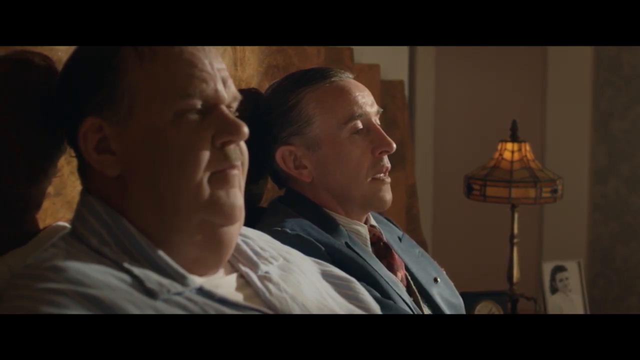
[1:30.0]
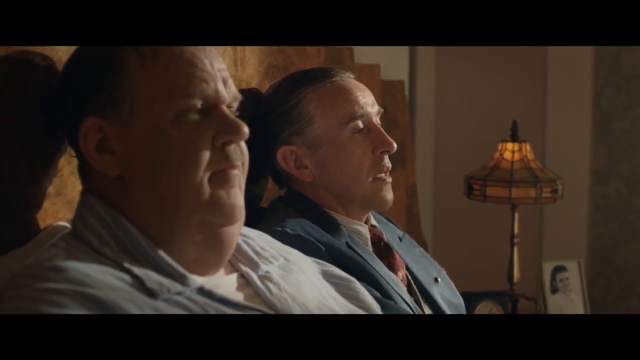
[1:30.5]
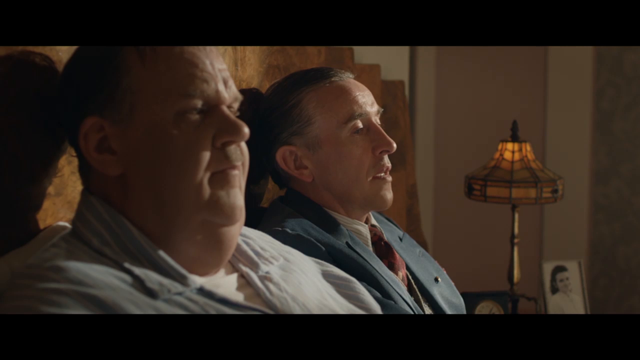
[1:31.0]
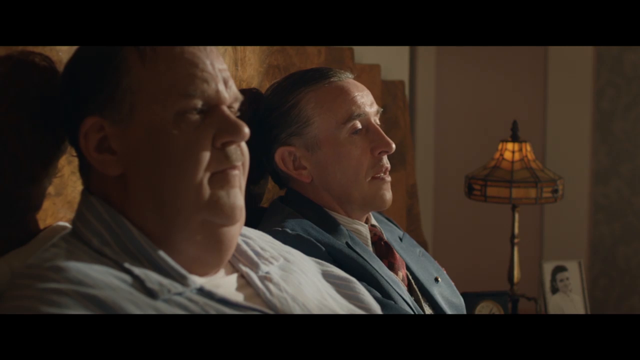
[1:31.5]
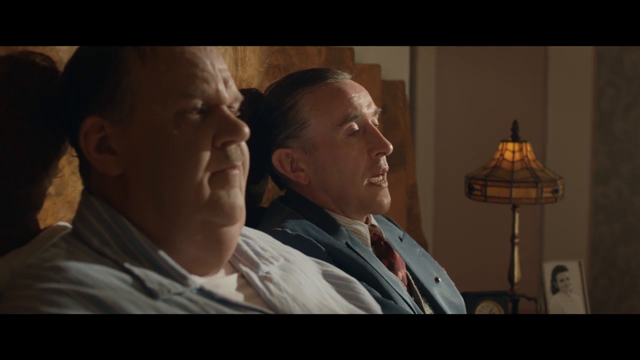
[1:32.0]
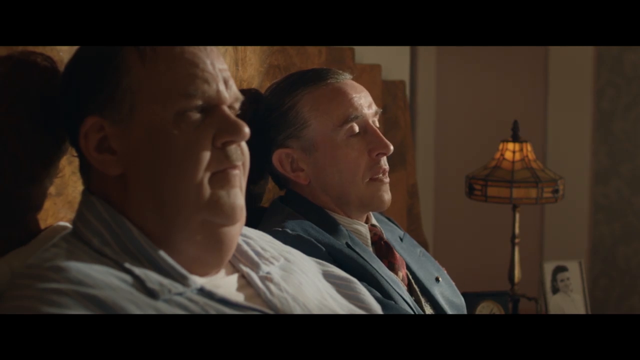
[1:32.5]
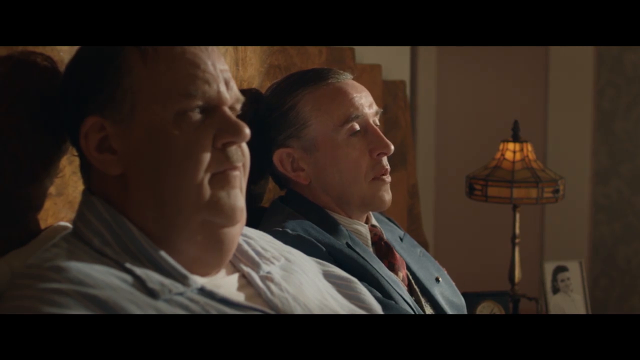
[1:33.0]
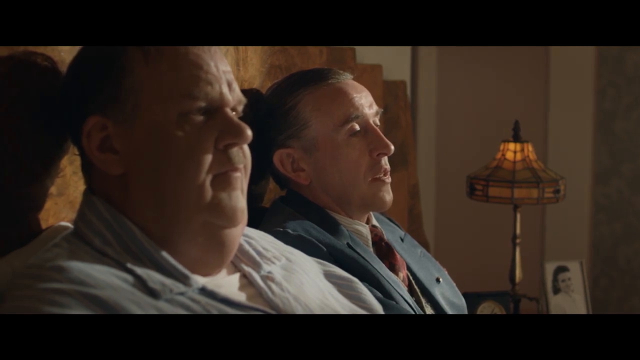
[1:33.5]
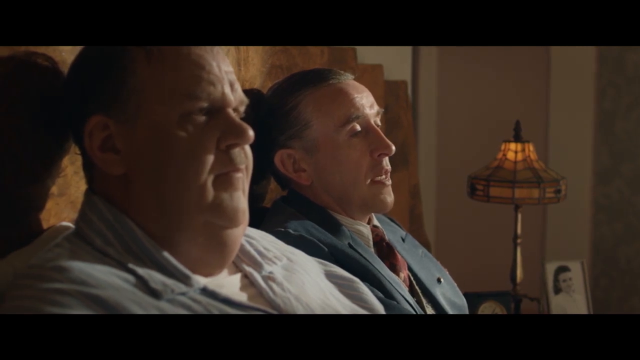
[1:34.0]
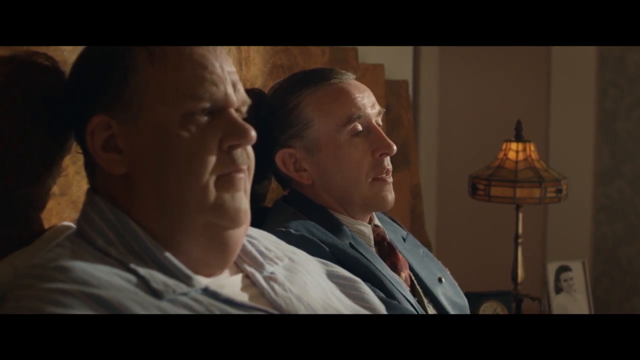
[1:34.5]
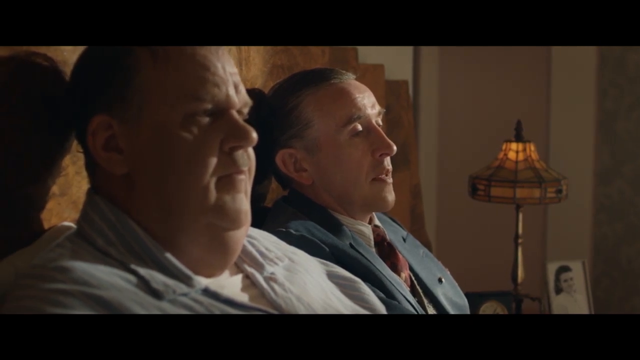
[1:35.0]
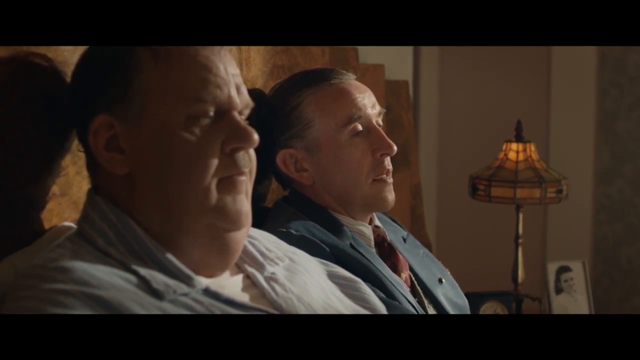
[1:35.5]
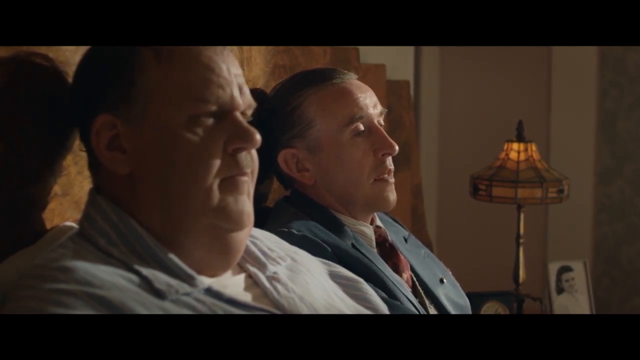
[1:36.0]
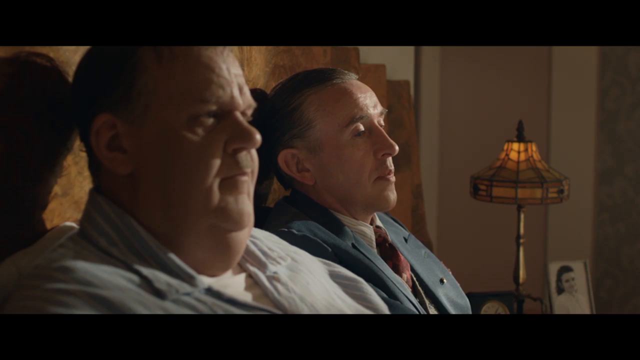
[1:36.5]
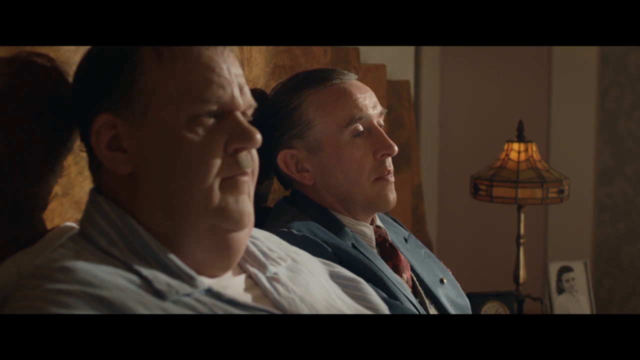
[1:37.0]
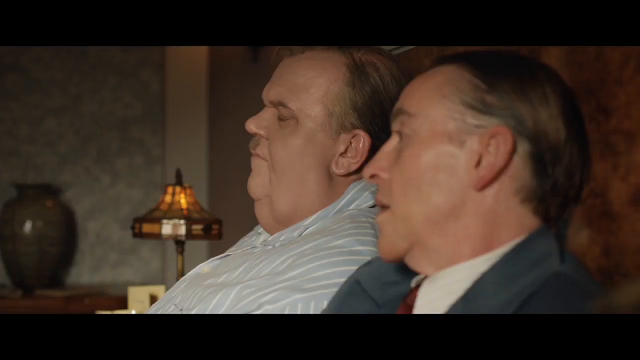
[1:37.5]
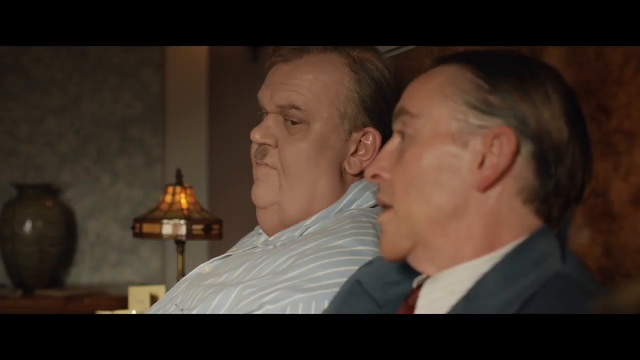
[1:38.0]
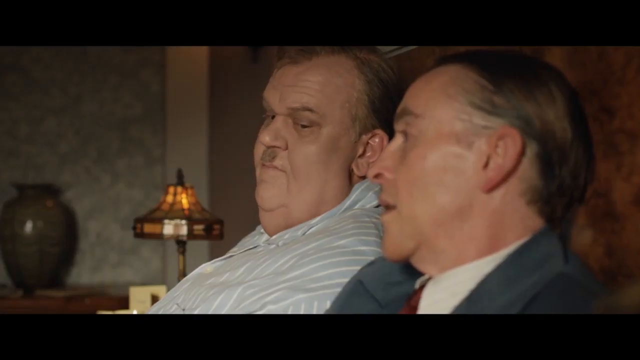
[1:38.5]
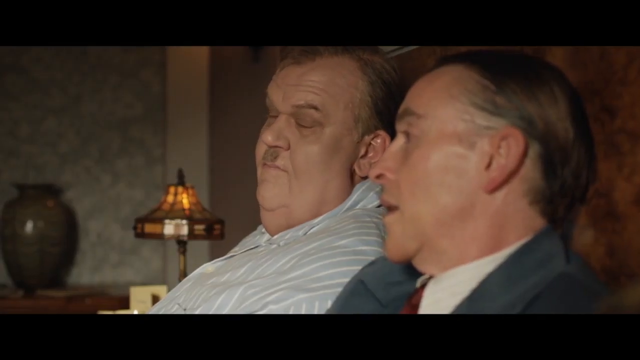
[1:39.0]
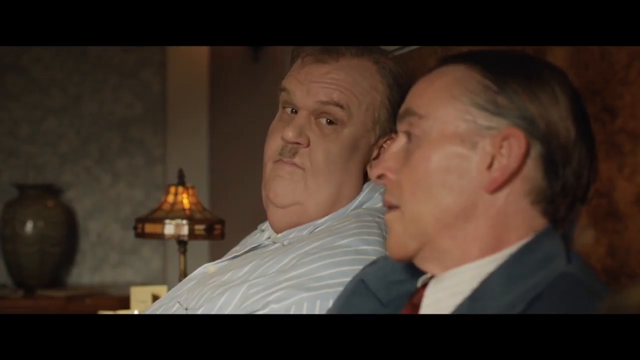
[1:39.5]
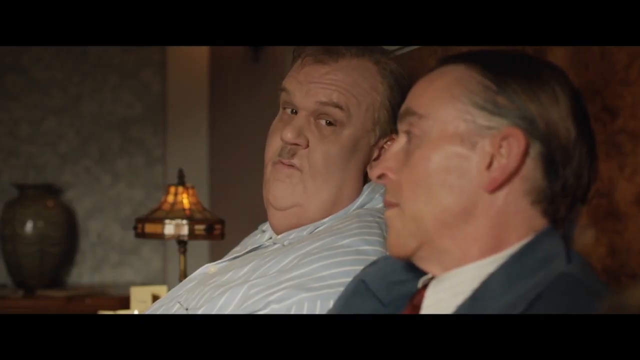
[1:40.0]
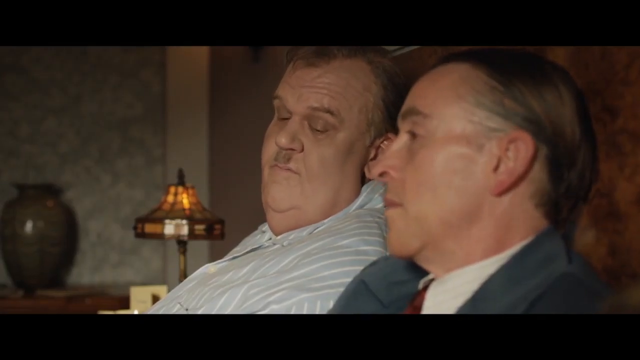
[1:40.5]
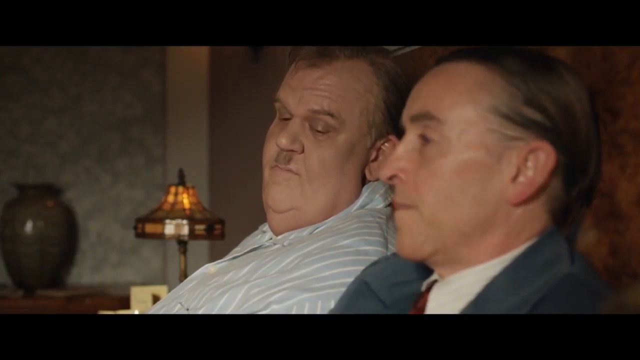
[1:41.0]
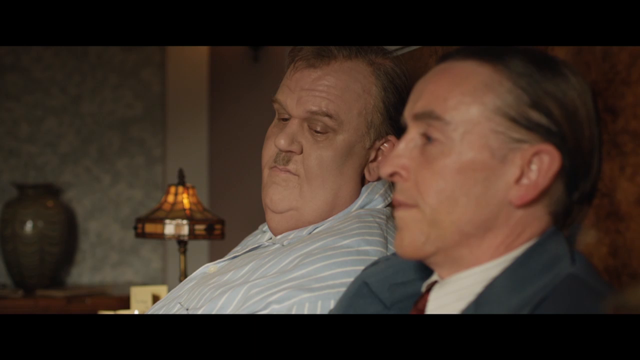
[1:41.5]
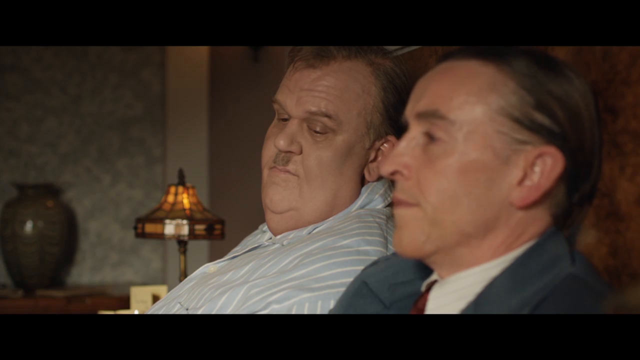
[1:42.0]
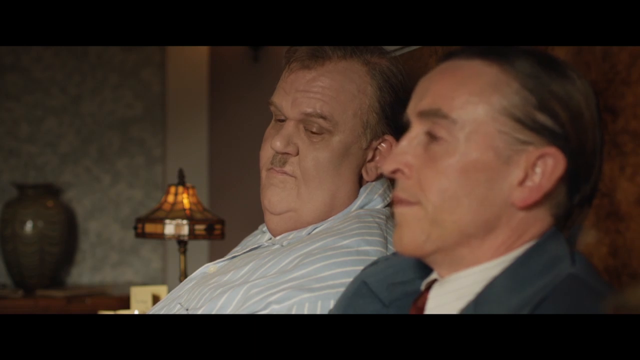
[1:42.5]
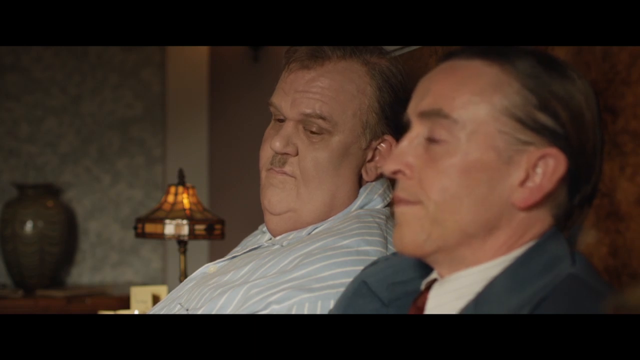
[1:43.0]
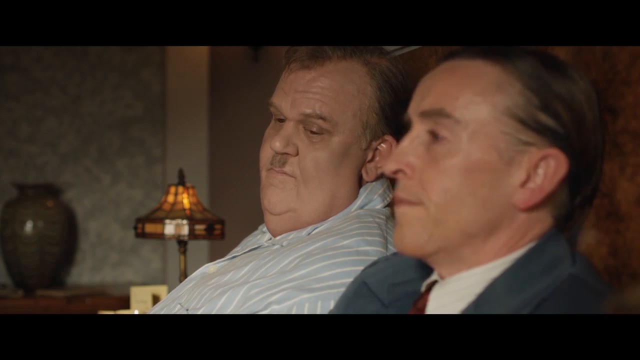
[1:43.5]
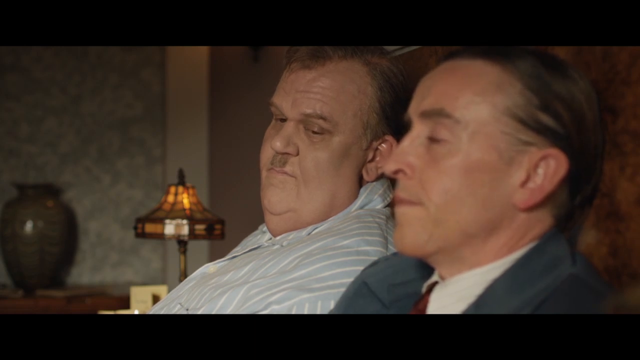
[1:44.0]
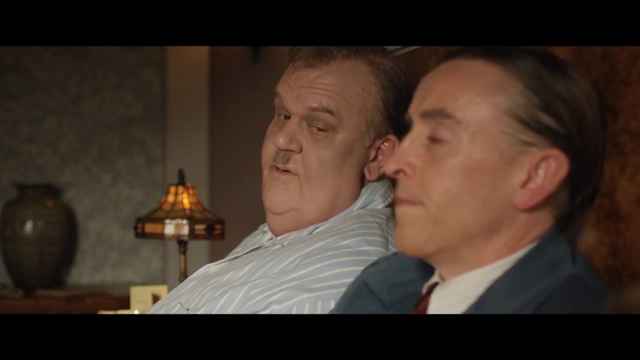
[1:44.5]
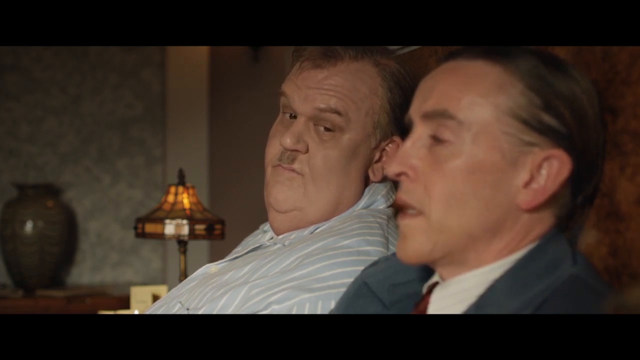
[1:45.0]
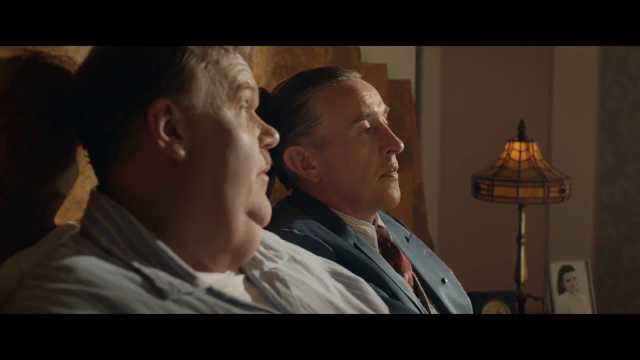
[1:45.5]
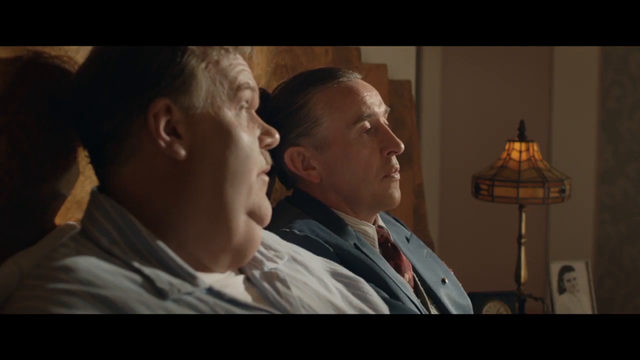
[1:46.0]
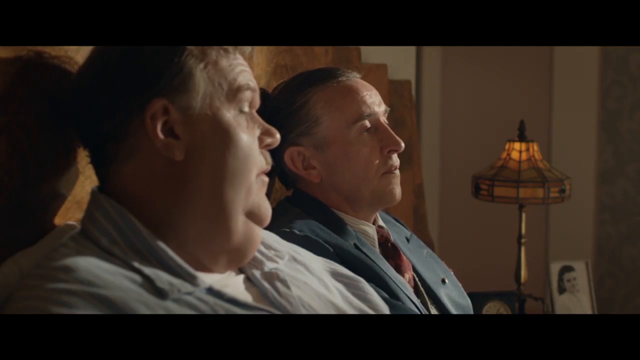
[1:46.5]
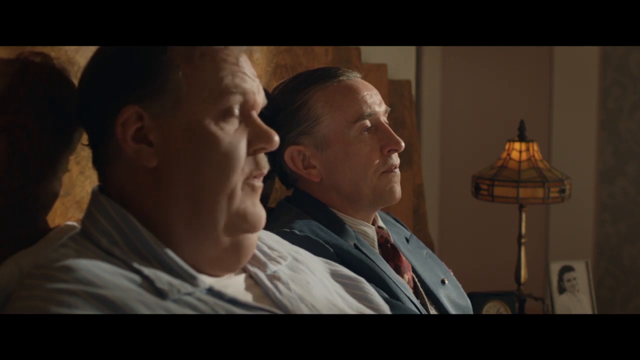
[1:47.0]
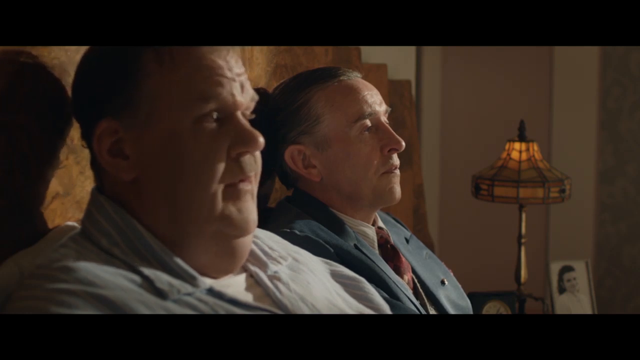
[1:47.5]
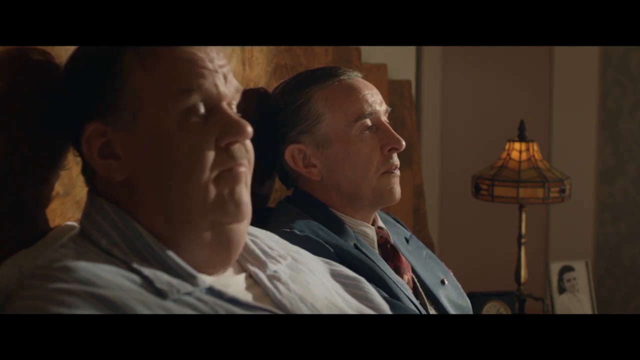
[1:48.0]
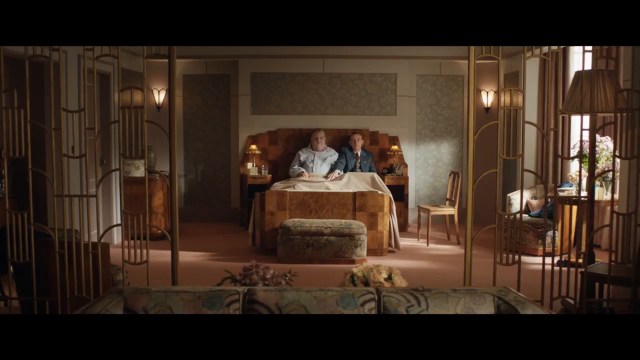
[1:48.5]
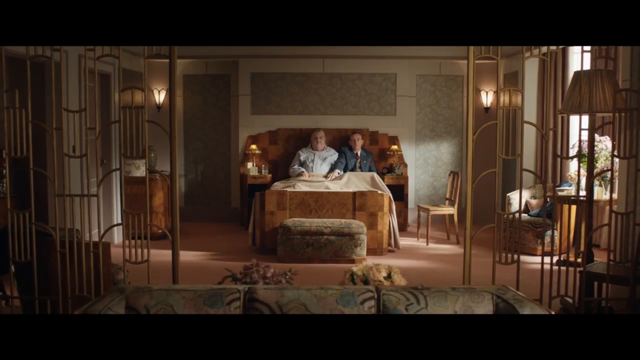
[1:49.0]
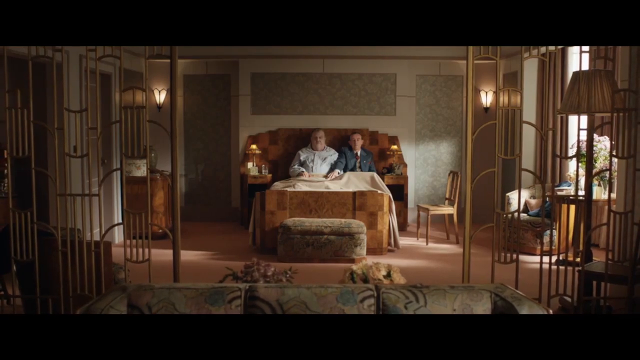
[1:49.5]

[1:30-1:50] The camera shows the right side of the faces of the heavyset man and the thin man. Both look straight forward; the thin man opens his mouth to speak and the heavyset man blinks. The camera changes to the left side of their faces, showing the heavyset man in blue and white pajamas and the thin man in a gray suit with a red tie and a white button-up collared shirt. The heavyset man looks to his left at the thin man and shakes his head no, then looks away. The thin man looks down. The heavyset man lifts an eyebrow, looking toward the thin man, as the camera changes angle to show the left side of both men's faces. The thin man speaks once, continuing to look forward. The heavyset man turns his head away from the thin man, looks straight ahead again and nods yes. The camera zooms out to show the foot of the bed with both men, a chest at the foot of the bed and a brown wooden footboard, taking in the entire length of the bedroom.